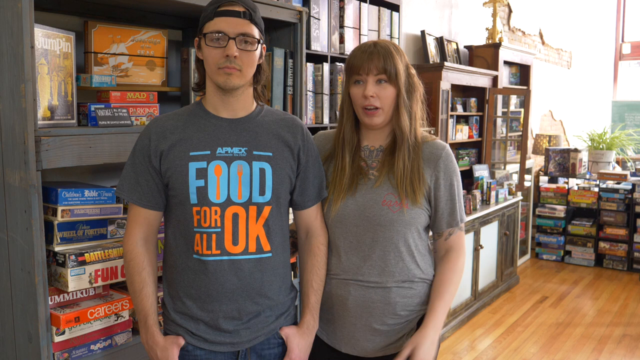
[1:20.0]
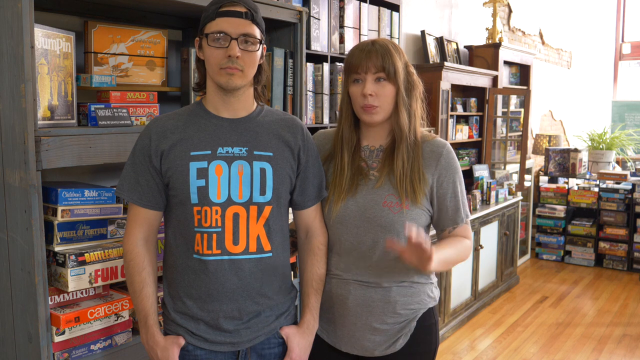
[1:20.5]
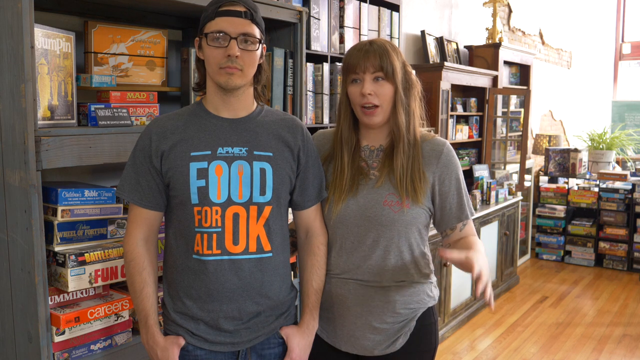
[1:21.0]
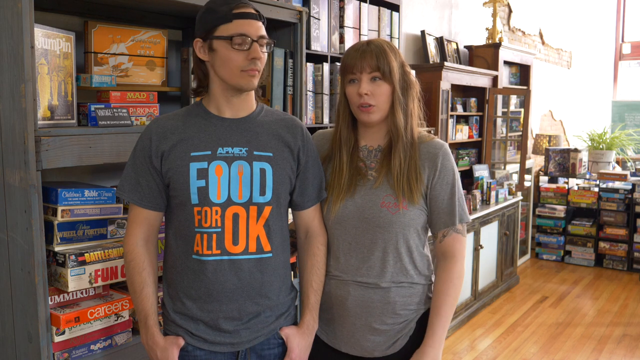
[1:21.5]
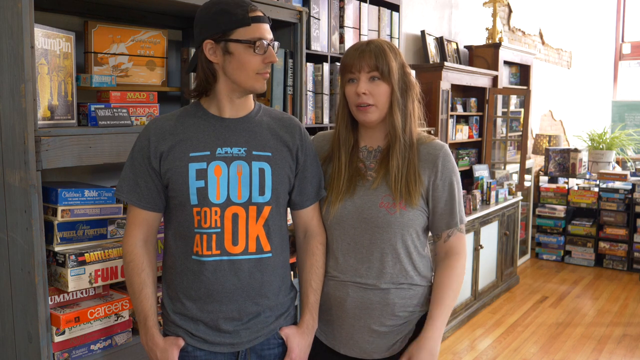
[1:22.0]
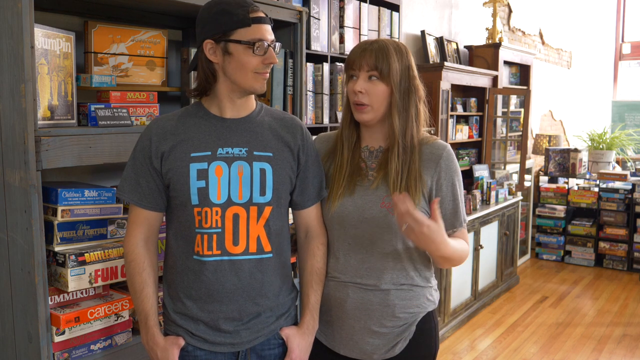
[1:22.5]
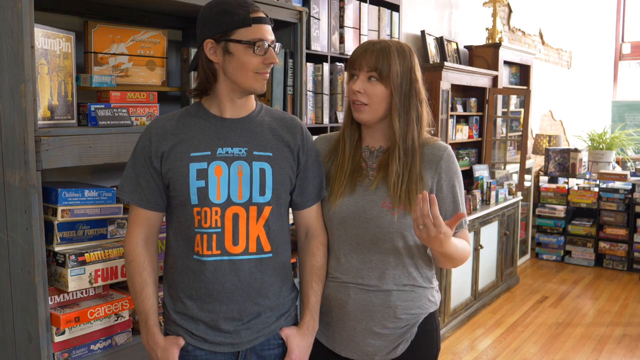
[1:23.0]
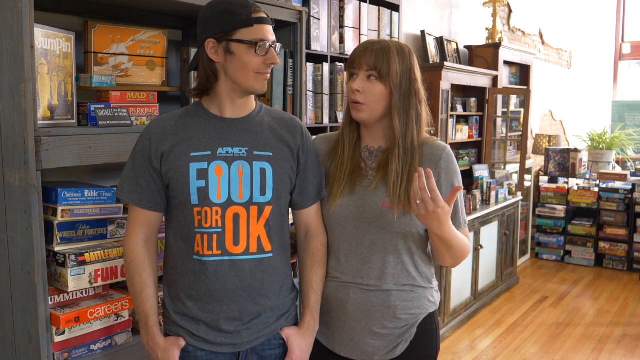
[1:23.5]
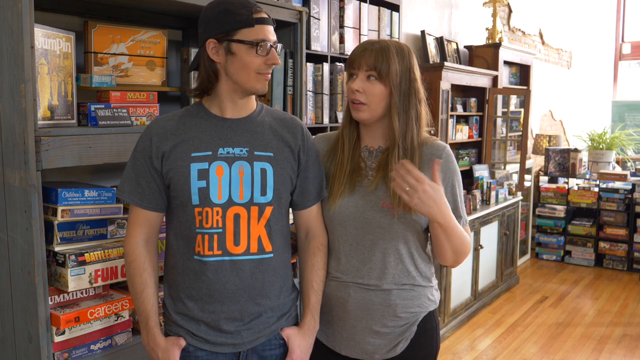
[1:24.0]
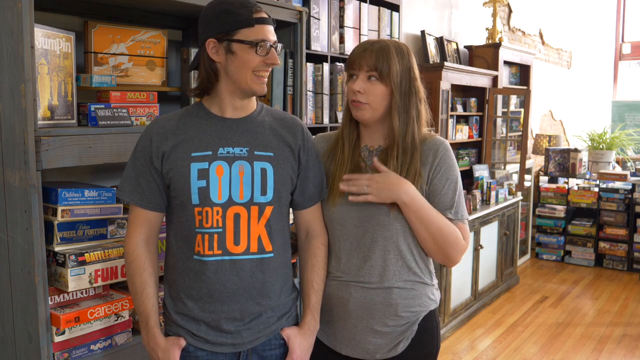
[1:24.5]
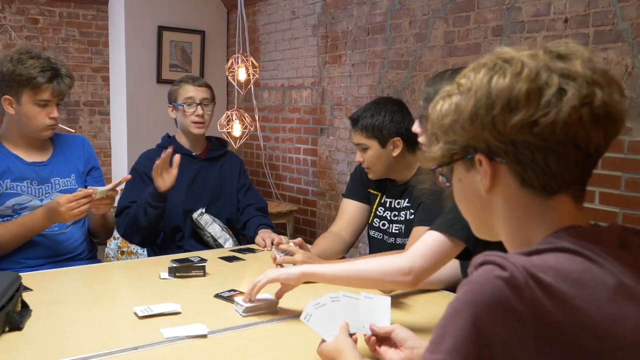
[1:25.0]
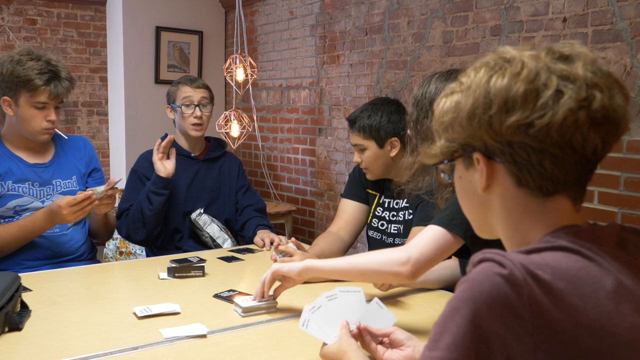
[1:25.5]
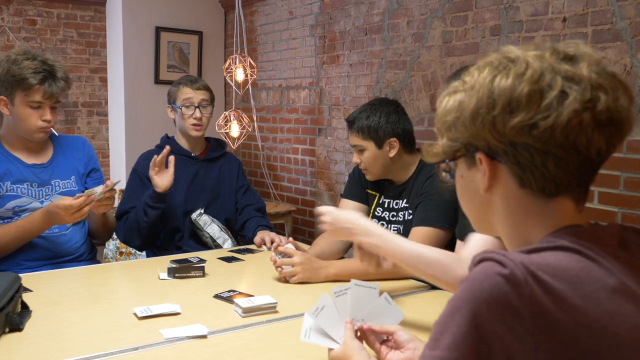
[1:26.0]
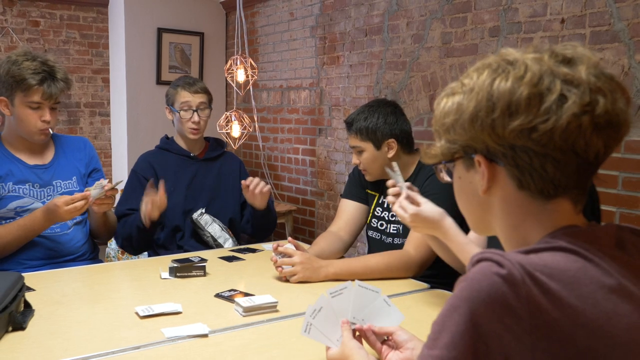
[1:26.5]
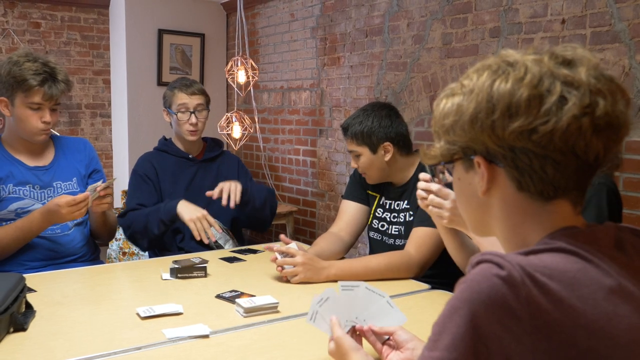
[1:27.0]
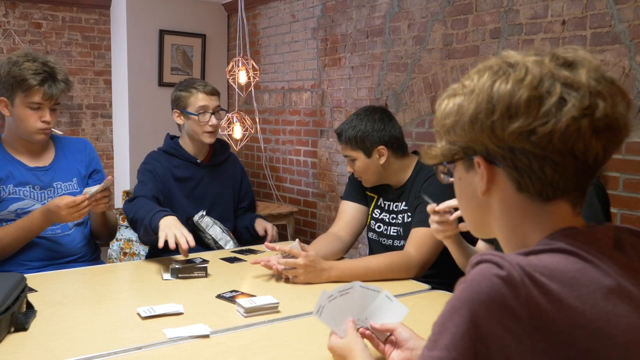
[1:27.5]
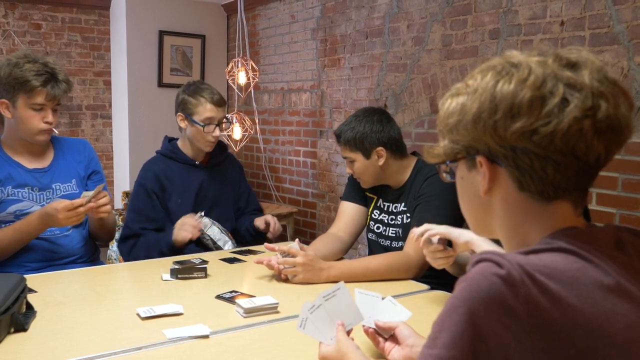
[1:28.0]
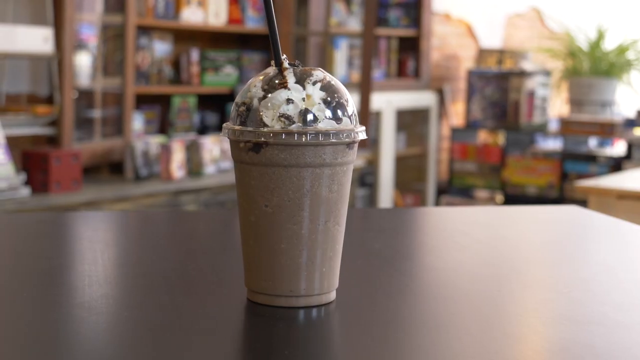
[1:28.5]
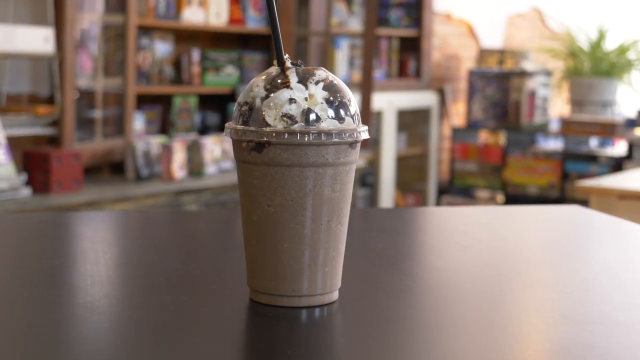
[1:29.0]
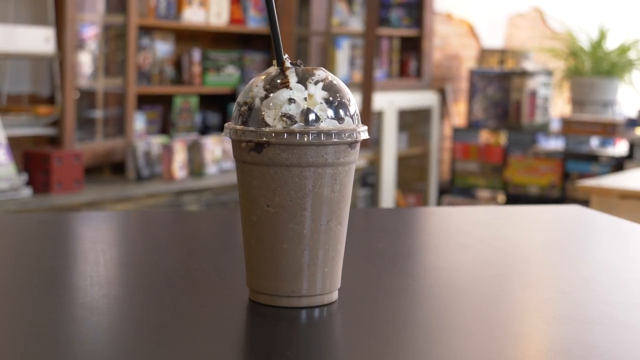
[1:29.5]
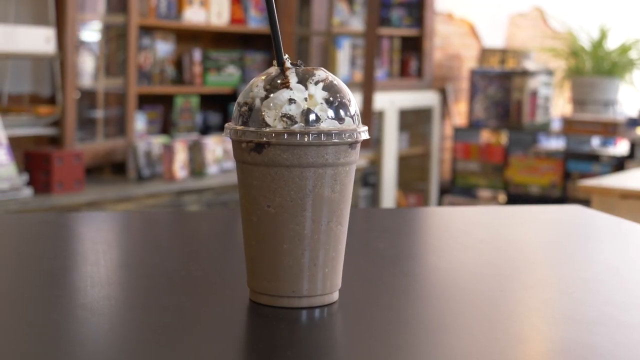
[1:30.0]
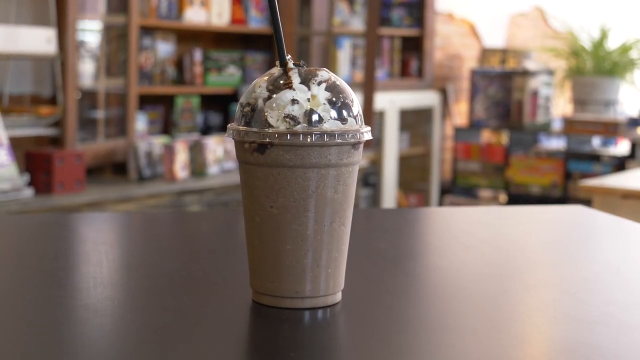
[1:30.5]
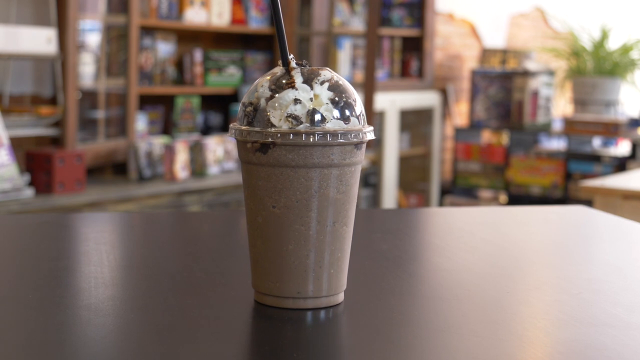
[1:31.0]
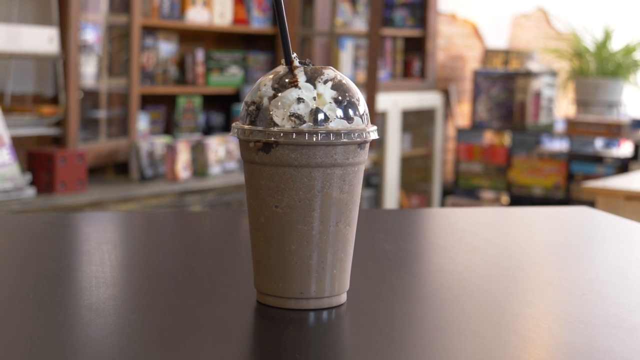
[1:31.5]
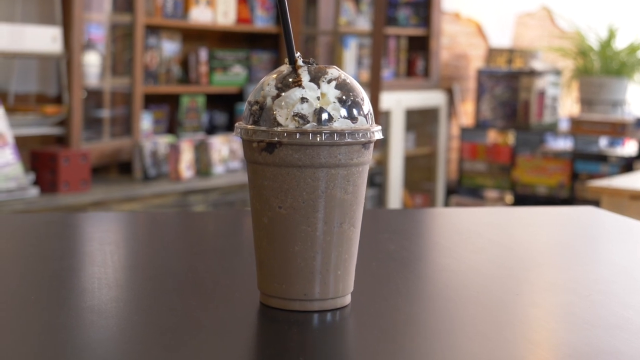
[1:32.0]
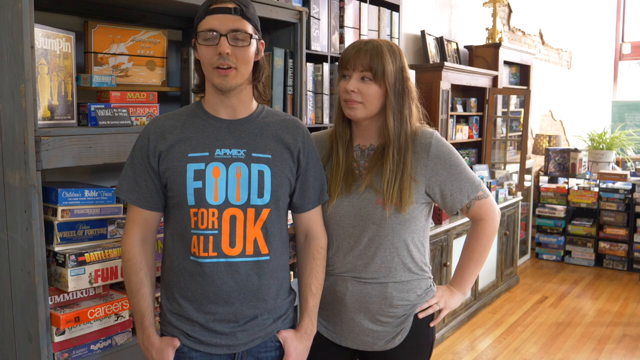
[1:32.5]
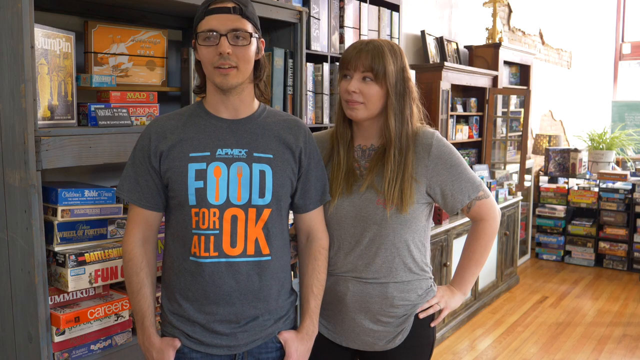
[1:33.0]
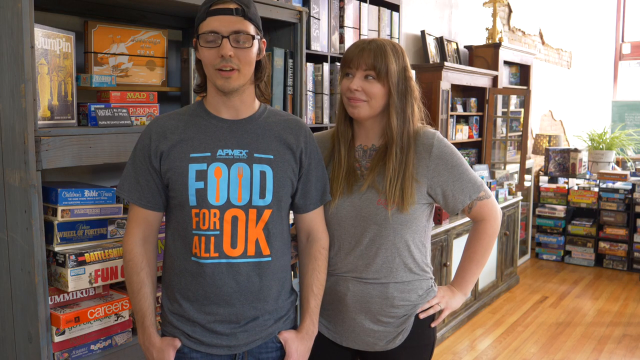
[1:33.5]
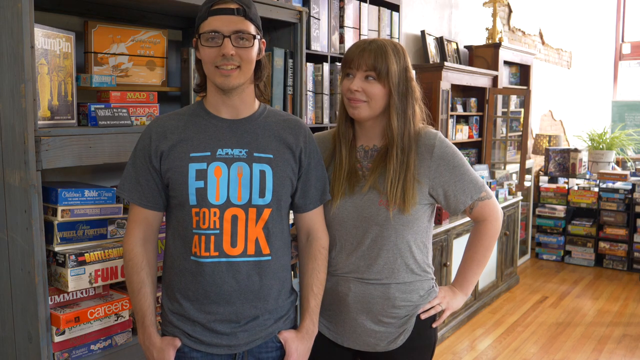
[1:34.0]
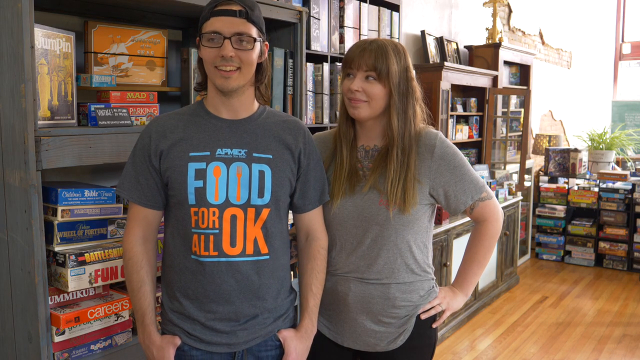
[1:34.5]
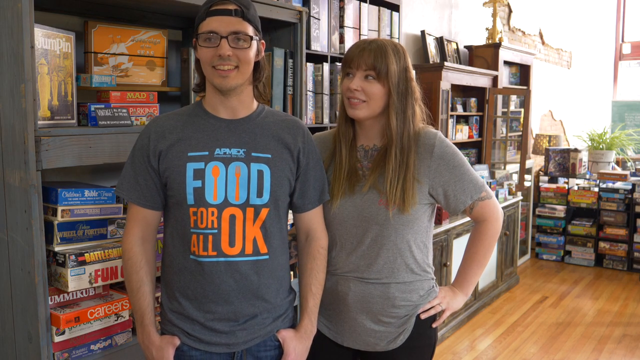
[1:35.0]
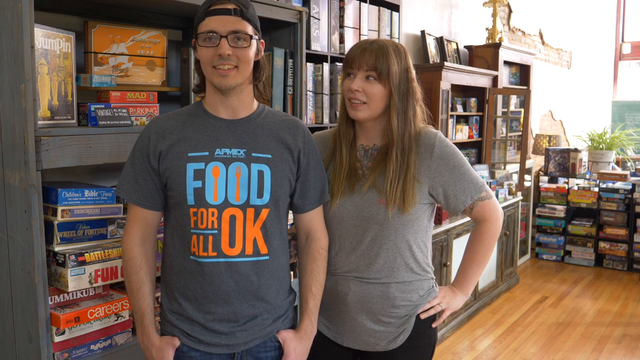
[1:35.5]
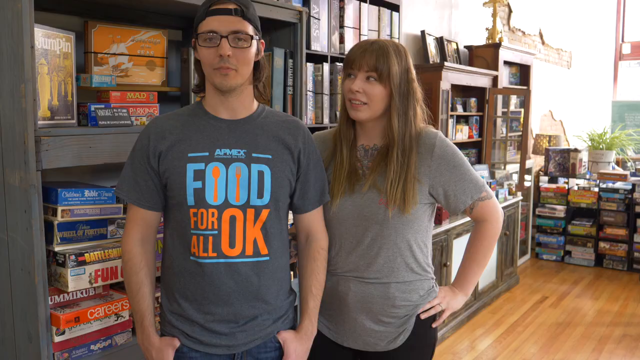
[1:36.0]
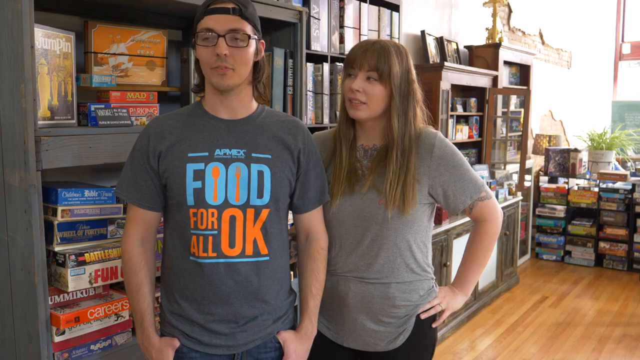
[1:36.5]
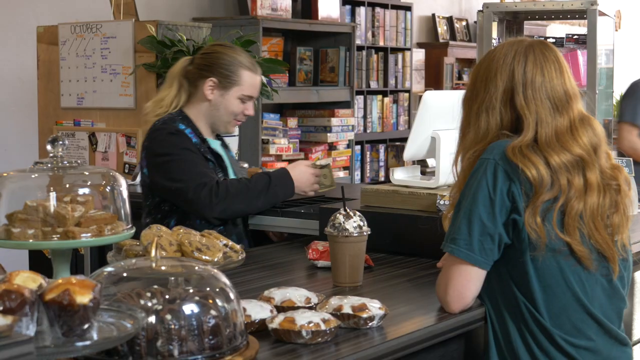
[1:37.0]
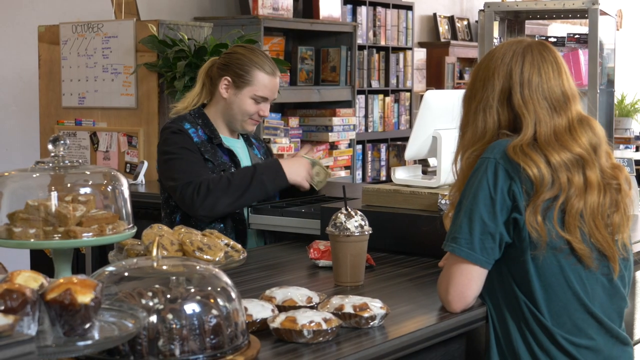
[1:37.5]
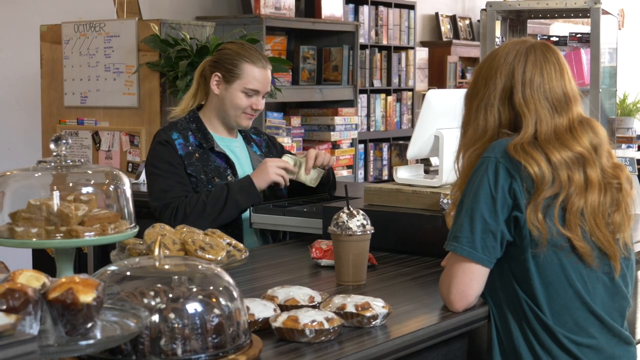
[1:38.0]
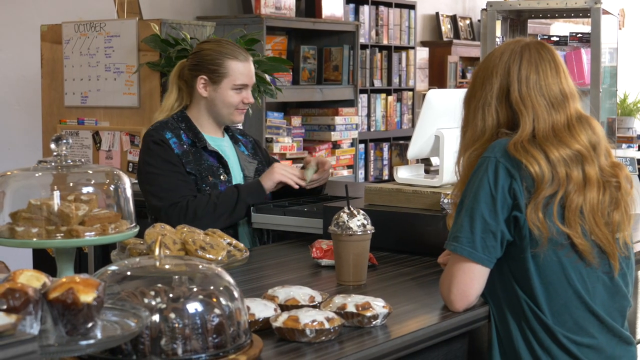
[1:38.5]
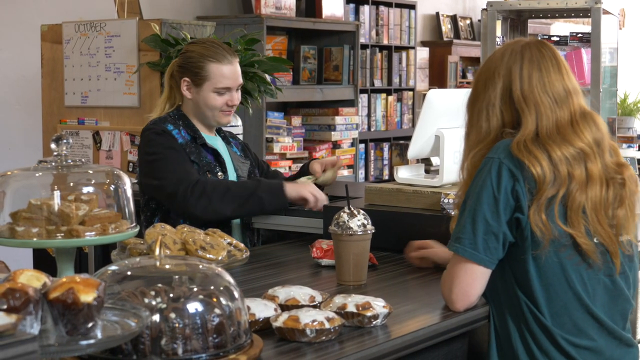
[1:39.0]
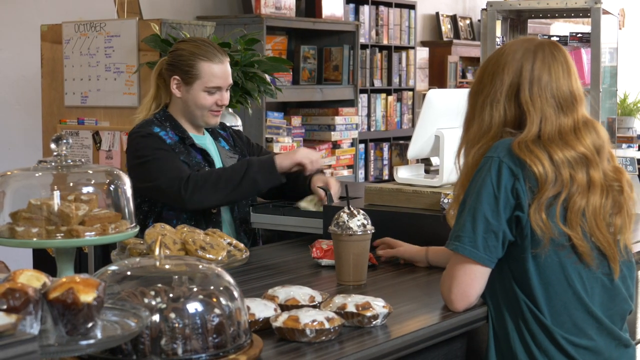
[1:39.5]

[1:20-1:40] The male and female workers from the gaming house are on screen. The woman speaks while looking off away from the camera, gesturing with her left hand; she raises it, gestures, lowers it toward her side, and a few seconds later raises it again as she and the male owner make eye contact. While she holds her hand up, what appears to be a wedding band is visible, suggesting the two could possibly be a husband and wife who own the cafe or gaming house together. The next scene shows a group of teens, apparently all male, around a table holding cards and playing a card game of some sort. Two golden lights hang down in the center of the table, apparently wire with small light bulbs inside. The male on the left is chewing on some sort of piece of plastic or maybe a candy sucker. Next, a plastic cup is full of some sort of chocolate beverage topped with whipped cream and cookie crumbles. The scene returns to the male owner and the woman speaking; her left hand is on her hip, and the man smiles and speaks while she looks at him affectionately. Then a worker in a black jacket and teal shirt gives a customer change from the drawer.